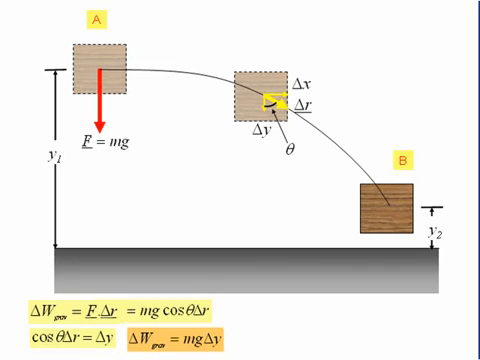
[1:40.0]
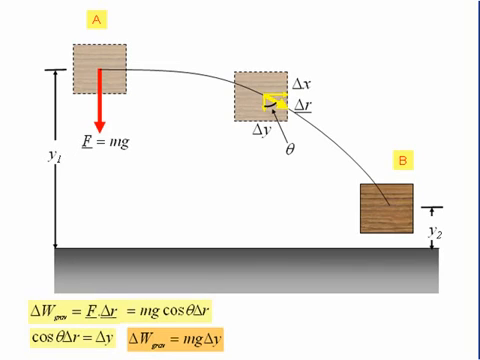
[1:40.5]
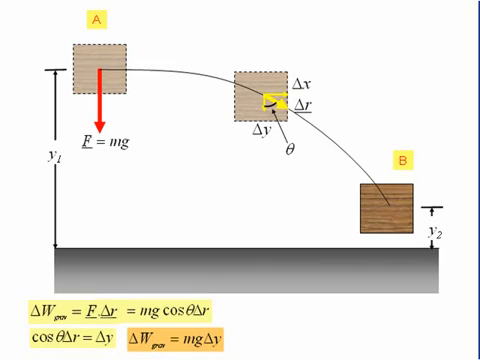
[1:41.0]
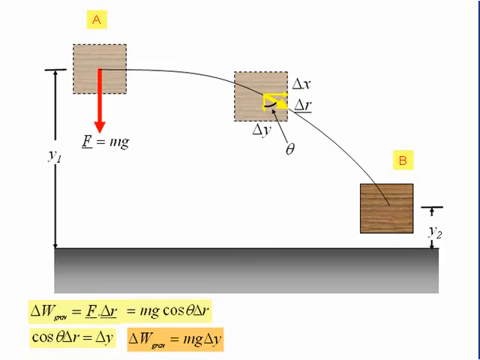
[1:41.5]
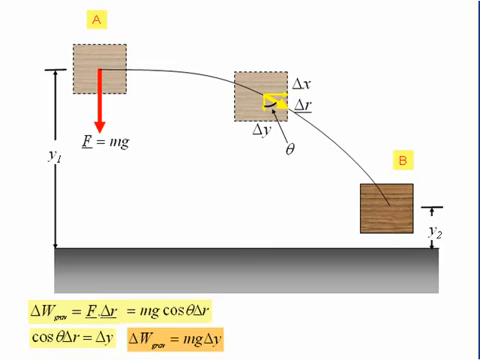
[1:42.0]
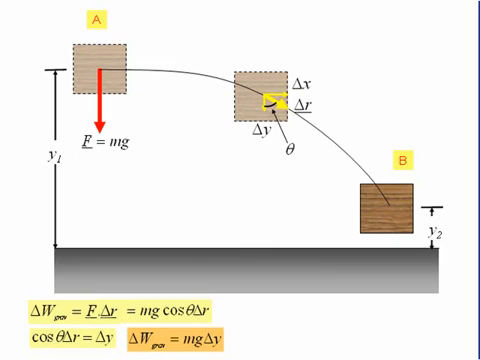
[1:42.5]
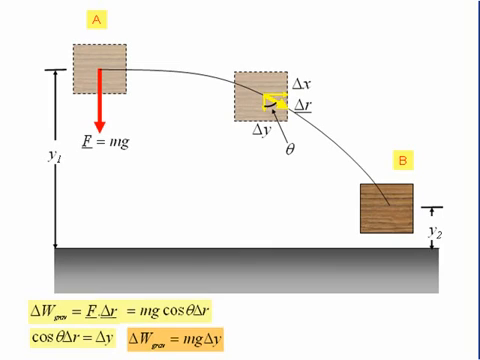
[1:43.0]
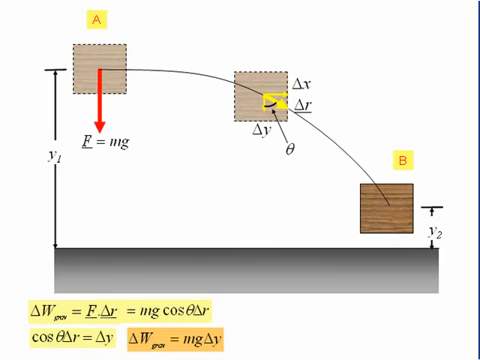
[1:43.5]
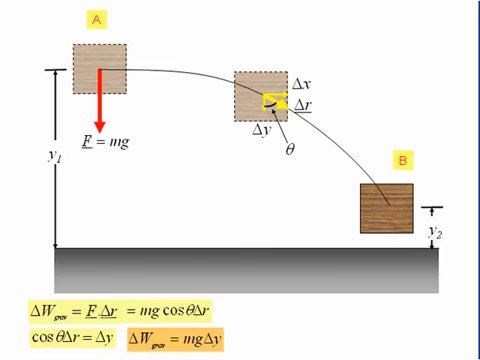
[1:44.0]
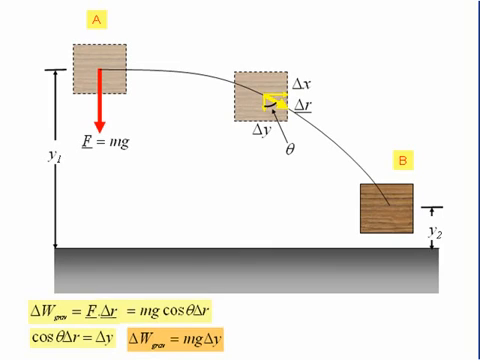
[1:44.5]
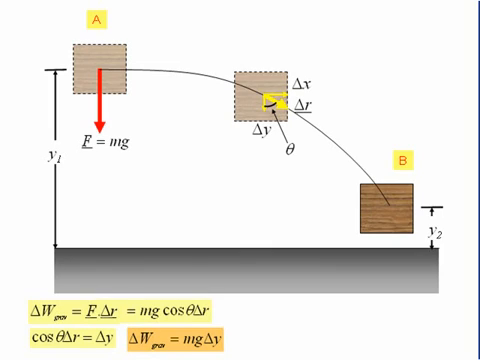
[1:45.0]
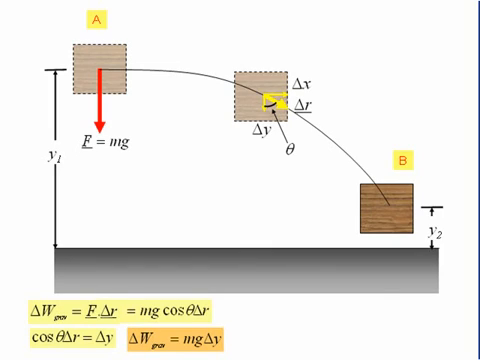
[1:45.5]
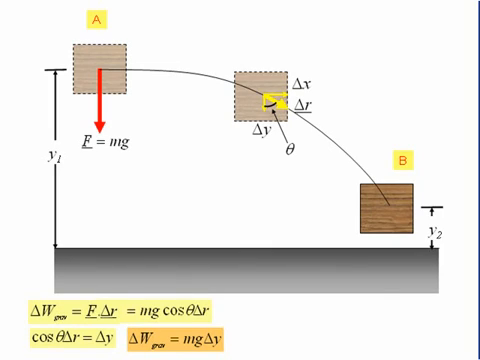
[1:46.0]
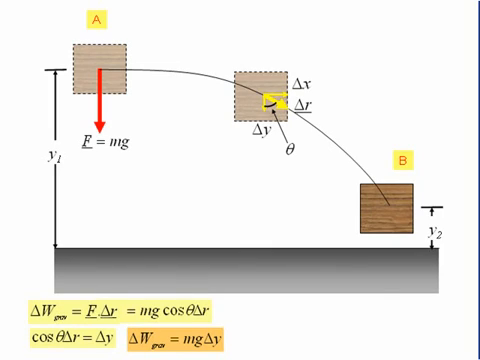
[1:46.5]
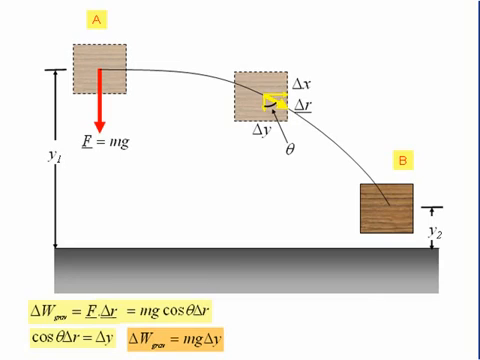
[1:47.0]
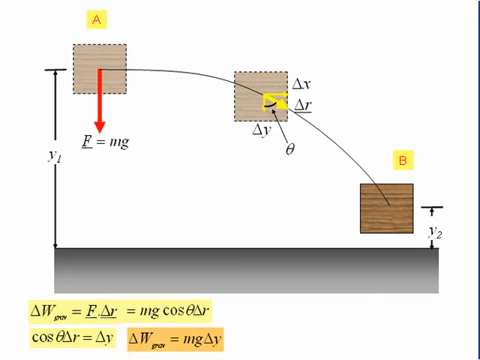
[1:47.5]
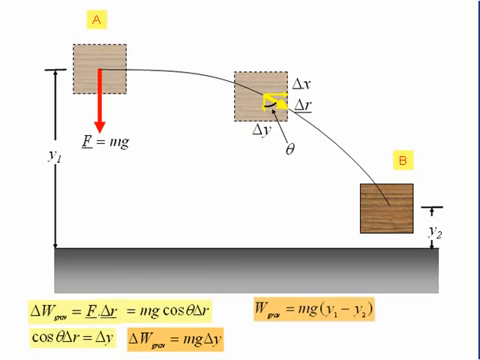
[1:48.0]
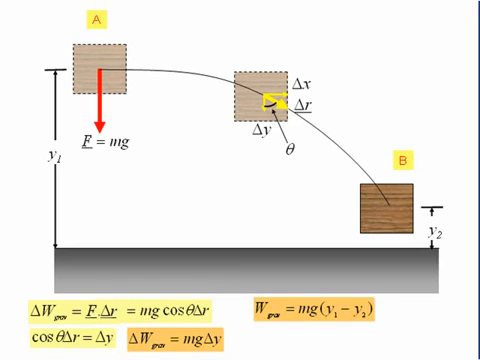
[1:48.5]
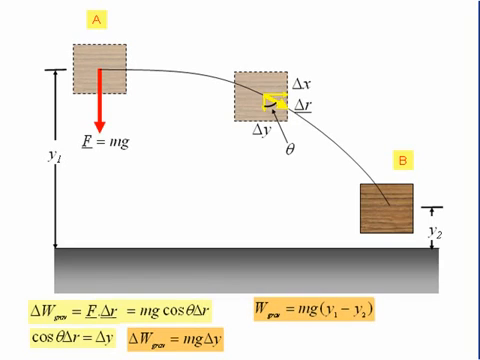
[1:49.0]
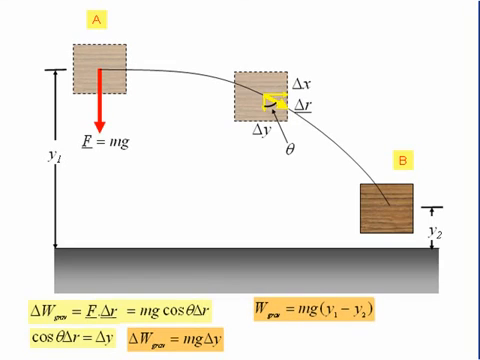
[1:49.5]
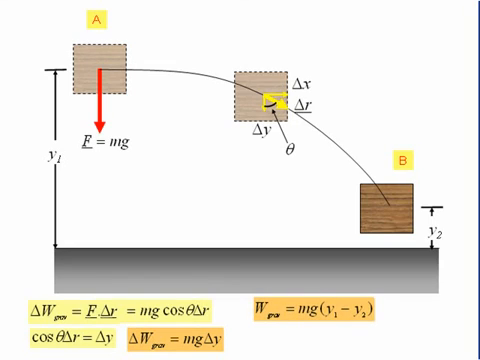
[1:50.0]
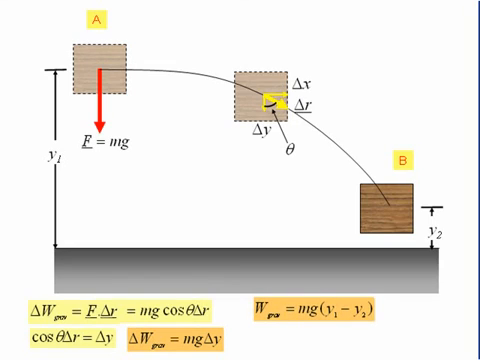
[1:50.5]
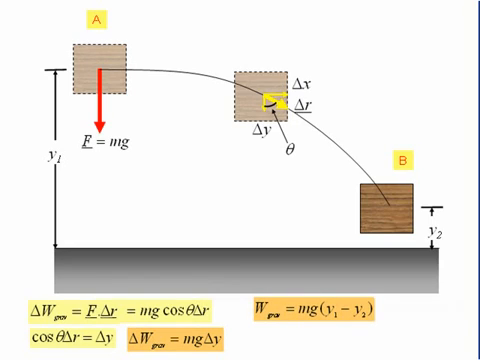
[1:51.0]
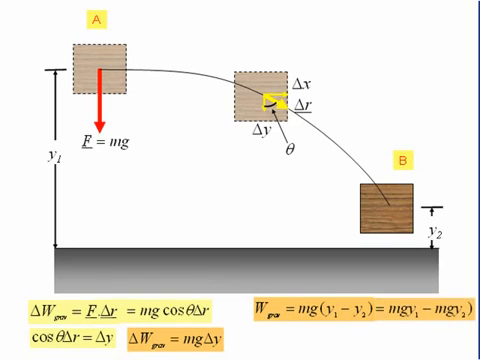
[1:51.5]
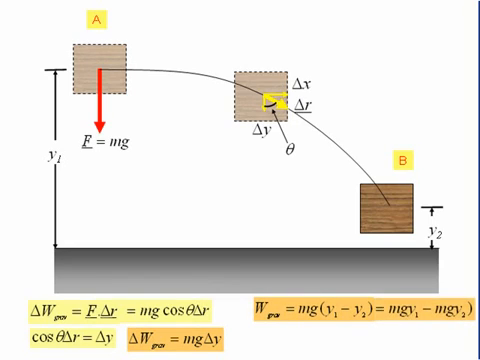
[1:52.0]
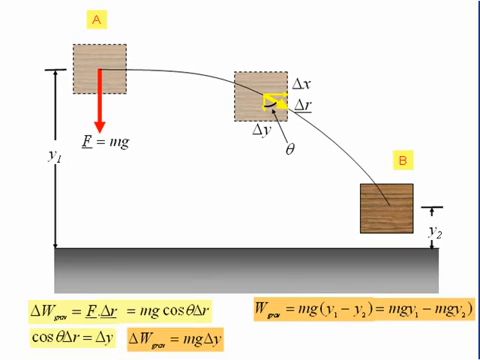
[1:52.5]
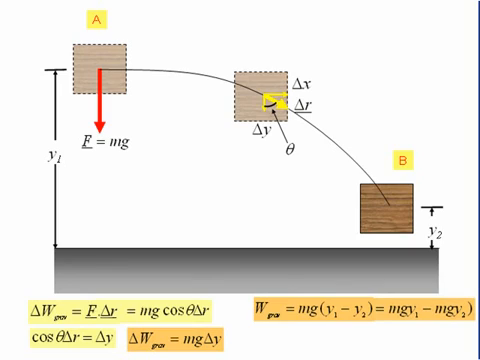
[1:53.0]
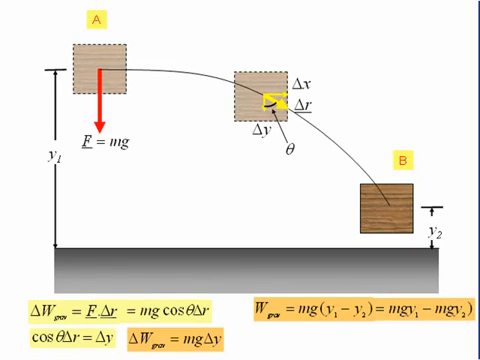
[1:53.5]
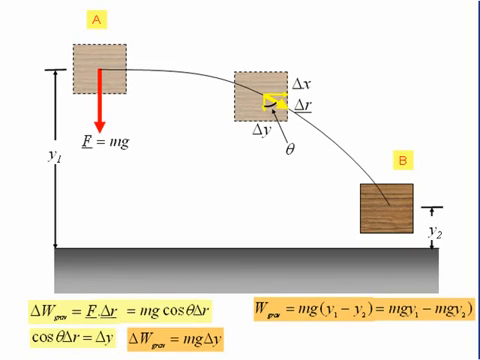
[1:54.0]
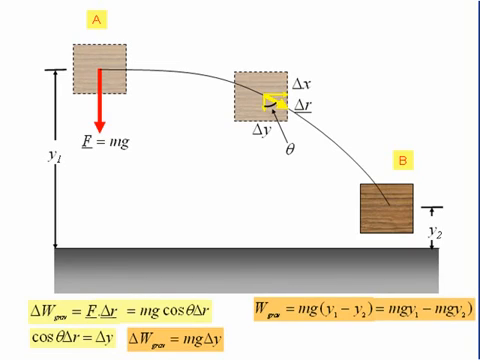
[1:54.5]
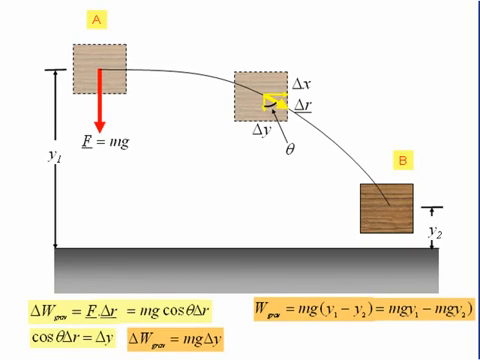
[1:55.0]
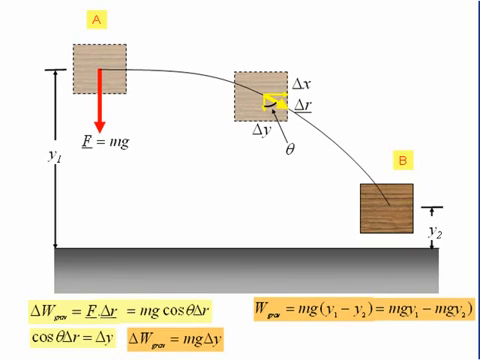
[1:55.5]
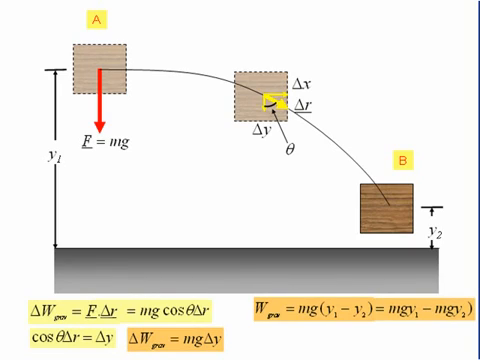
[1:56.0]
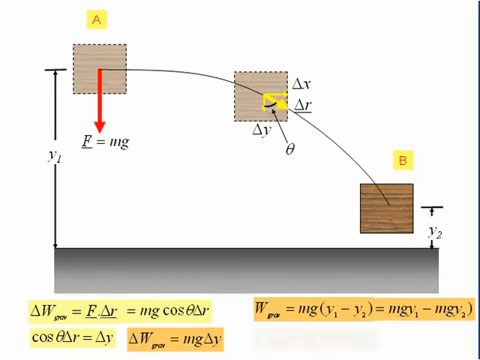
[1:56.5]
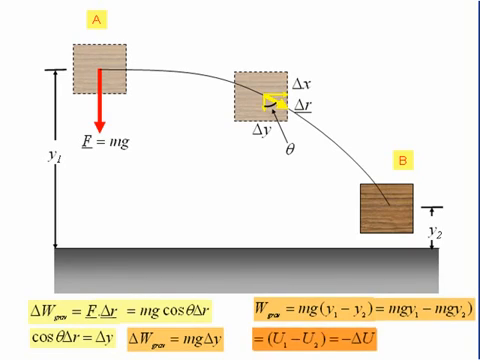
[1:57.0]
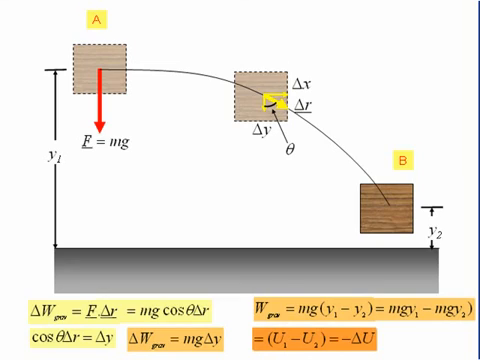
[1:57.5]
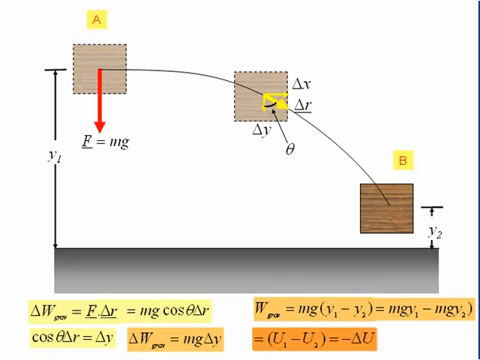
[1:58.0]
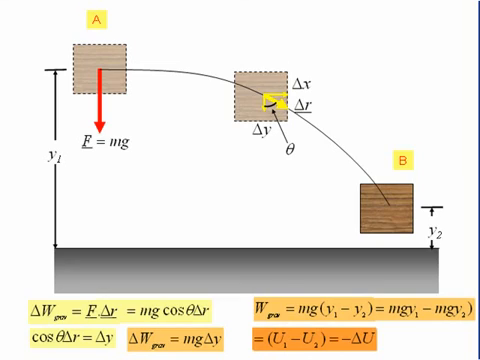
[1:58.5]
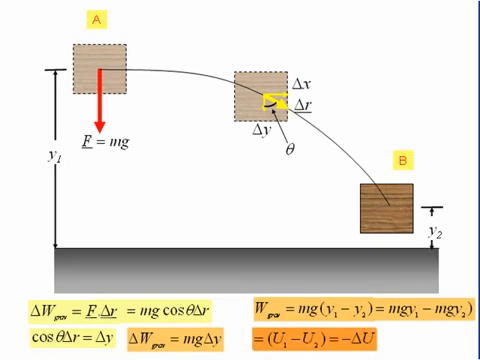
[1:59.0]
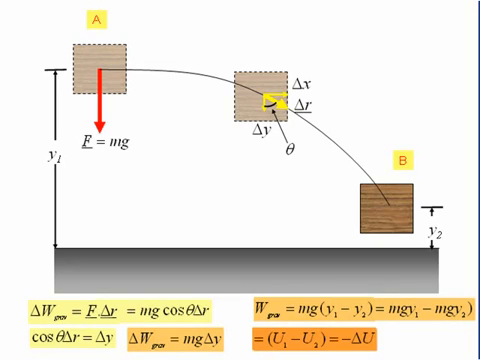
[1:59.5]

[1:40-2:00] After the orange-highlighted equation ΔW (with a subscript that is not visible) = mg ΔY is written, another equation appears below the grey box on the right-hand side: W with an unreadable subscript = mg(y₁ − y₂) = mg y₁ − mg y₂. This equation is highlighted in orange. Below it another equation appears, highlighted in a deeper orange: = (U₁ − U₂) = −ΔU, with the U's in capital letters. Meanwhile the images at the top stay the same, still showing the three triangles with their labels.